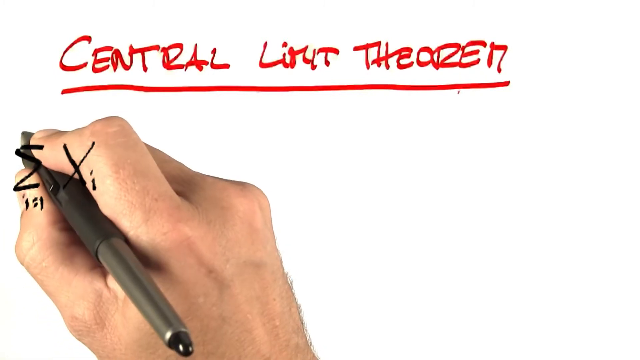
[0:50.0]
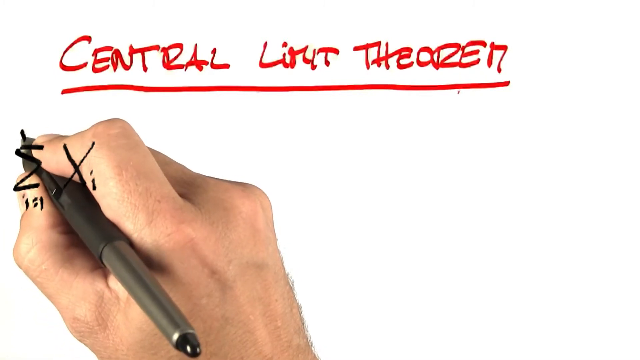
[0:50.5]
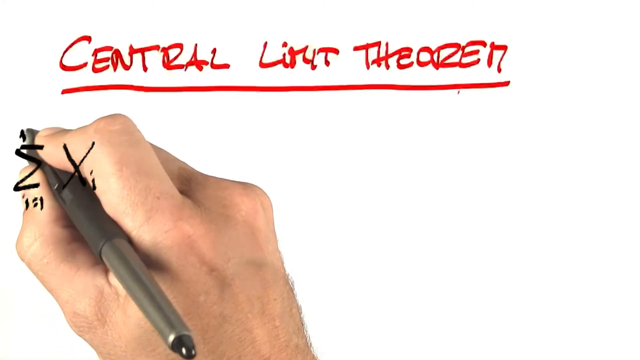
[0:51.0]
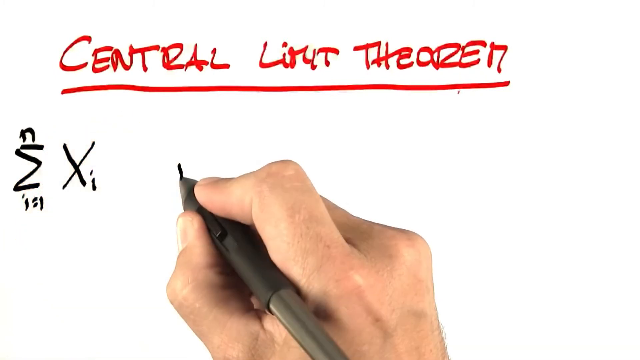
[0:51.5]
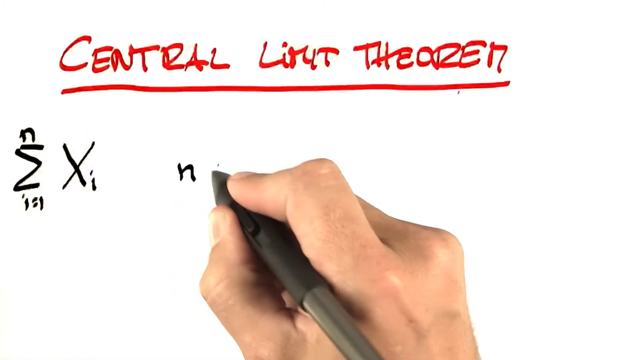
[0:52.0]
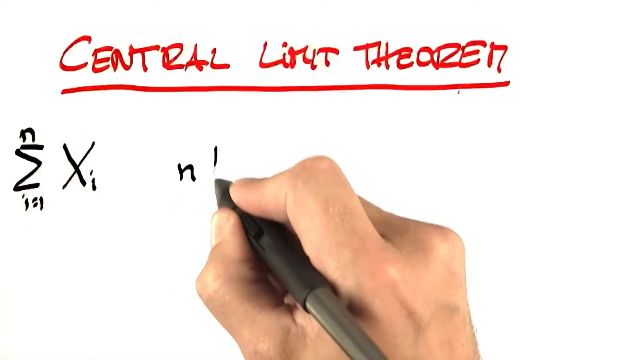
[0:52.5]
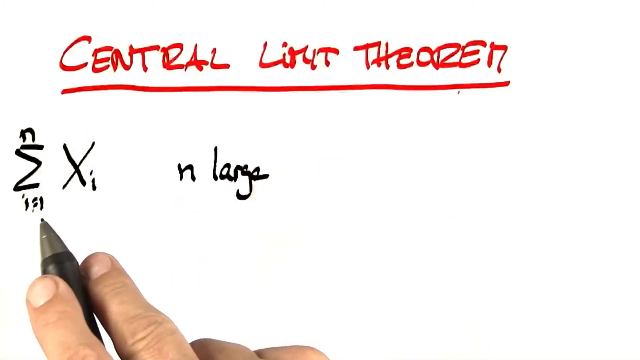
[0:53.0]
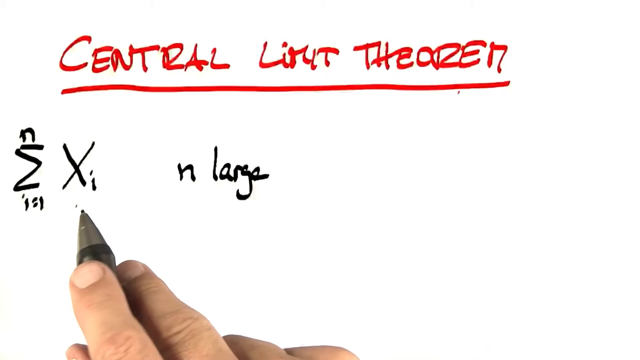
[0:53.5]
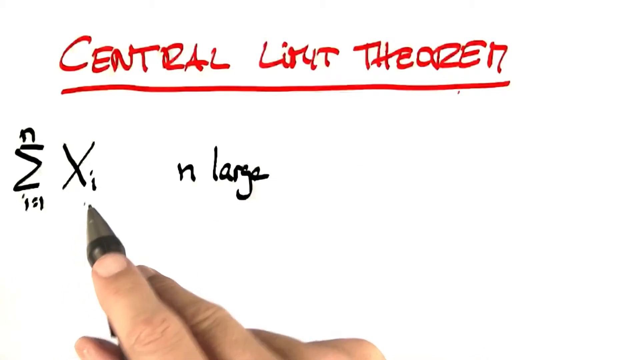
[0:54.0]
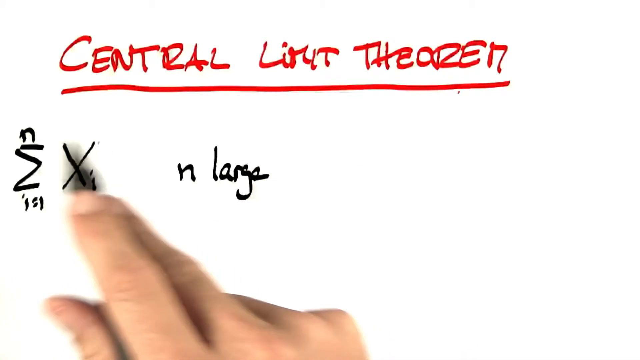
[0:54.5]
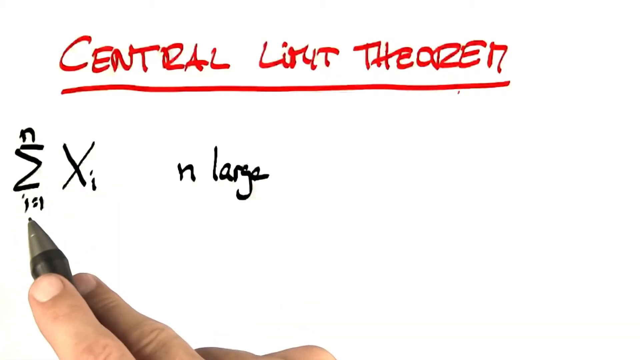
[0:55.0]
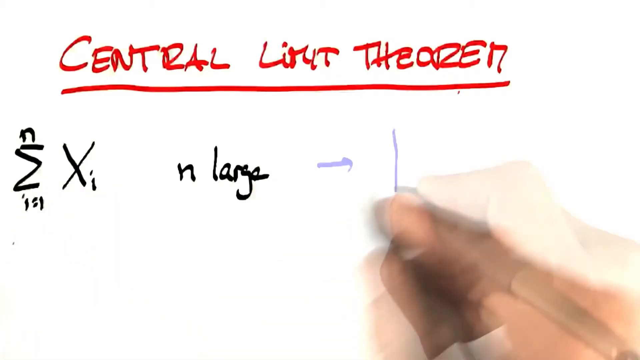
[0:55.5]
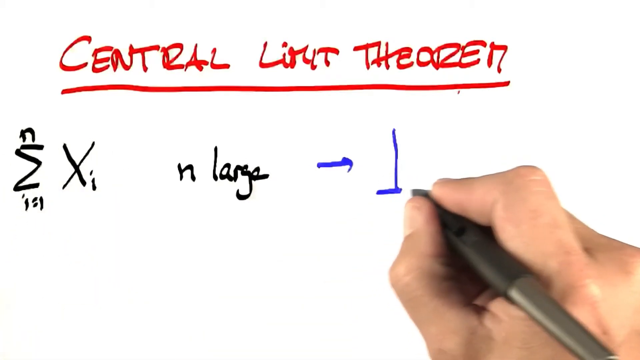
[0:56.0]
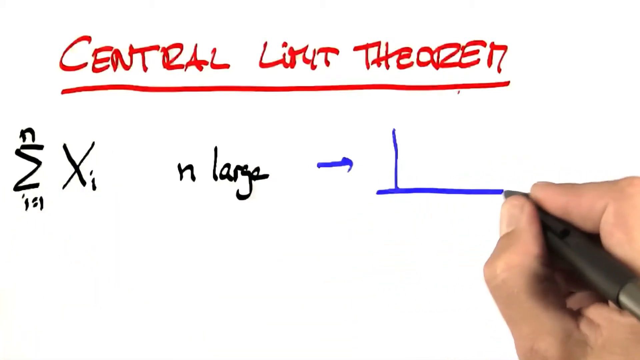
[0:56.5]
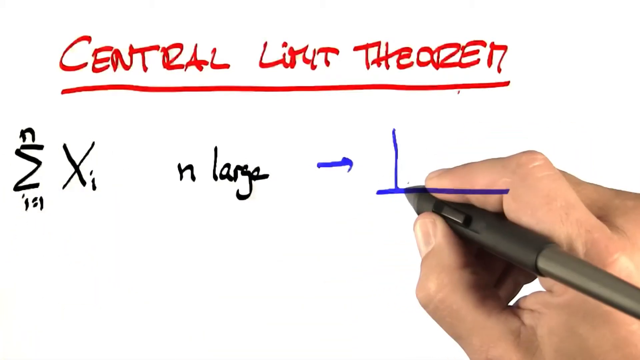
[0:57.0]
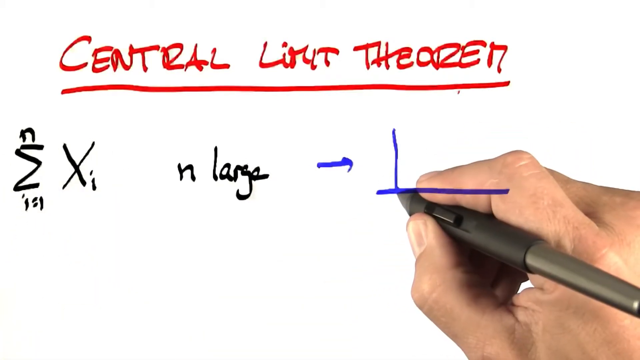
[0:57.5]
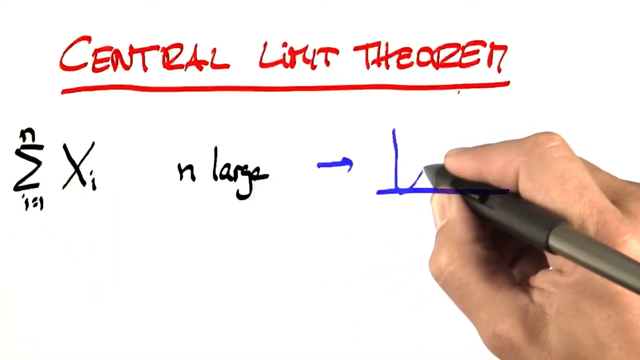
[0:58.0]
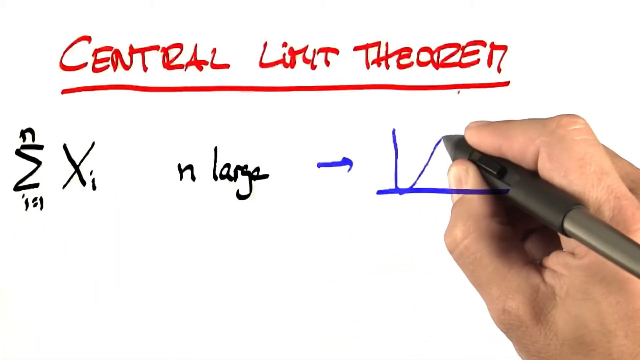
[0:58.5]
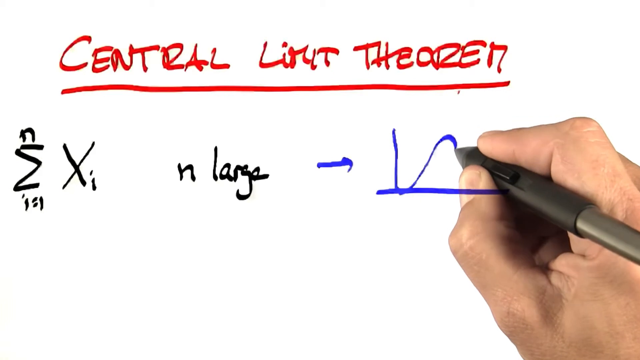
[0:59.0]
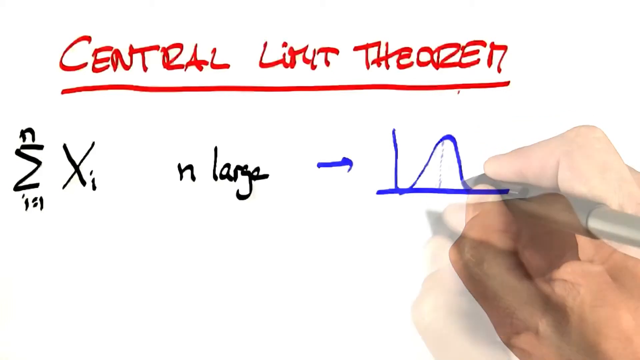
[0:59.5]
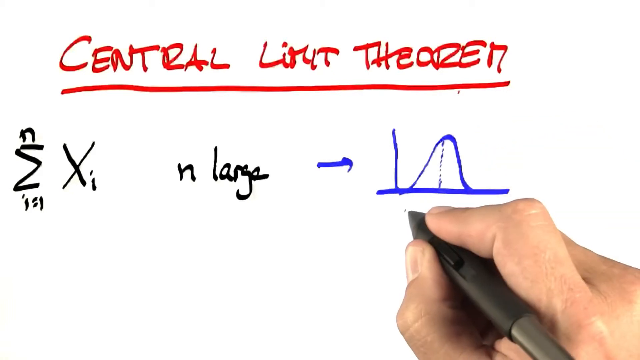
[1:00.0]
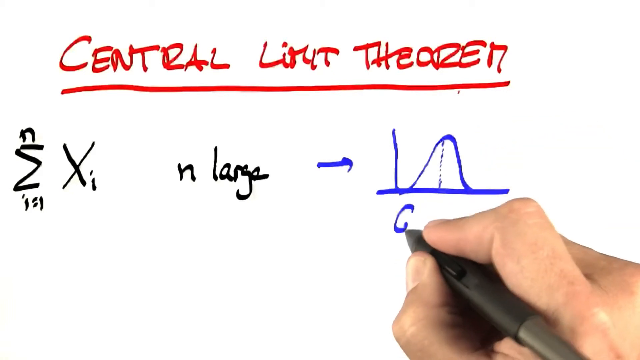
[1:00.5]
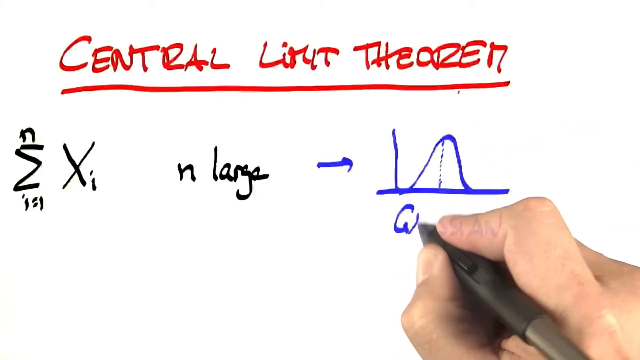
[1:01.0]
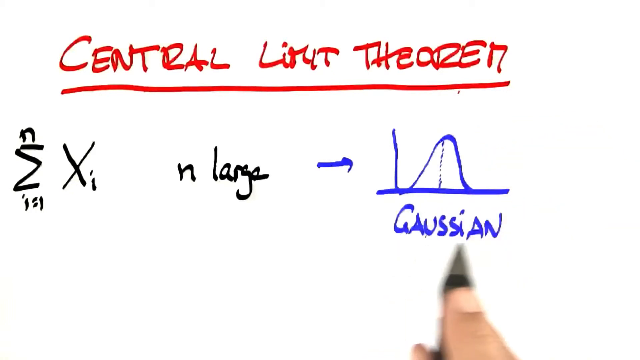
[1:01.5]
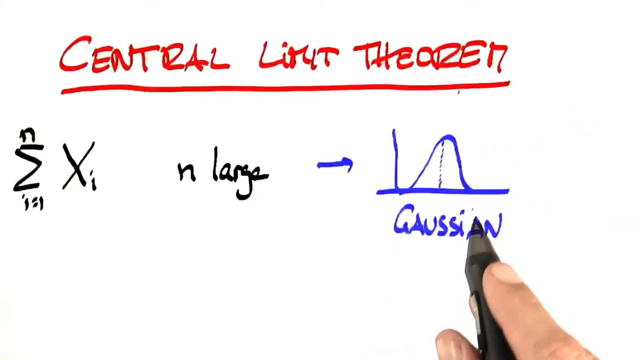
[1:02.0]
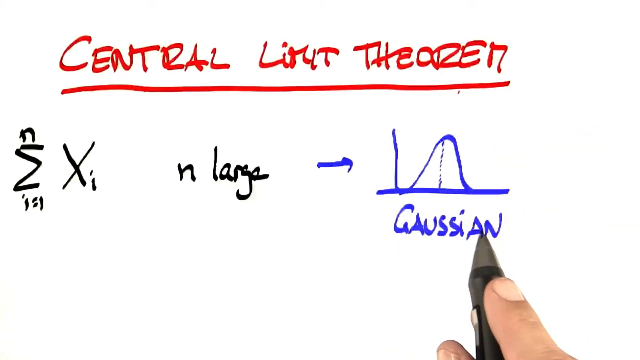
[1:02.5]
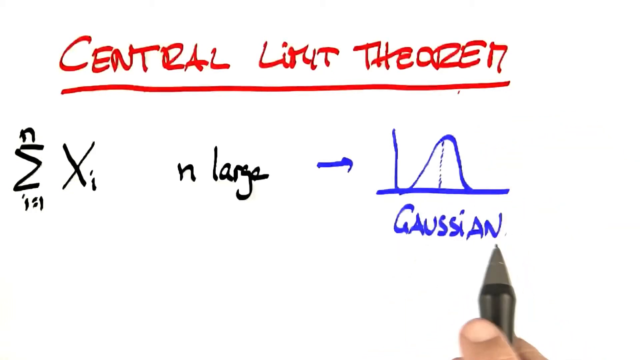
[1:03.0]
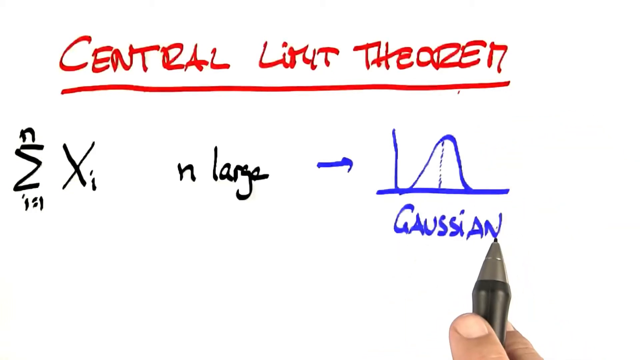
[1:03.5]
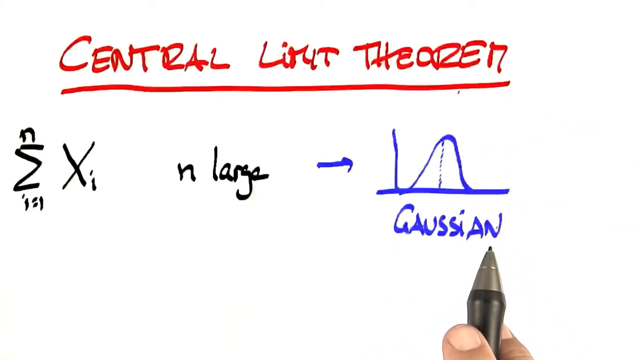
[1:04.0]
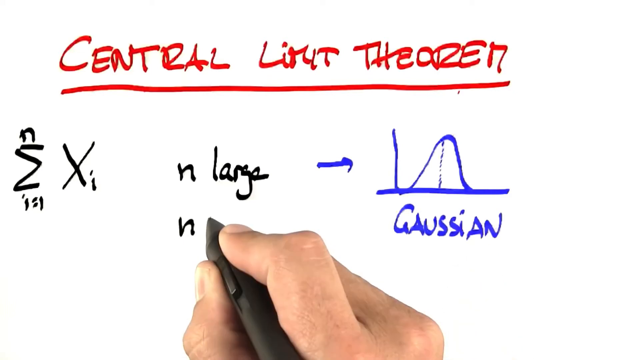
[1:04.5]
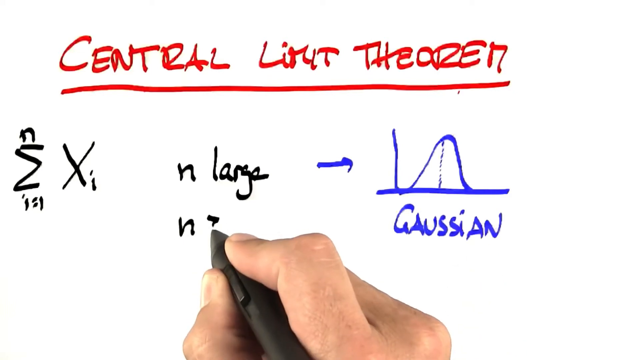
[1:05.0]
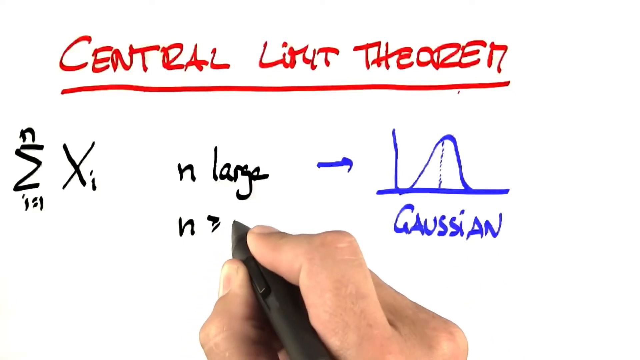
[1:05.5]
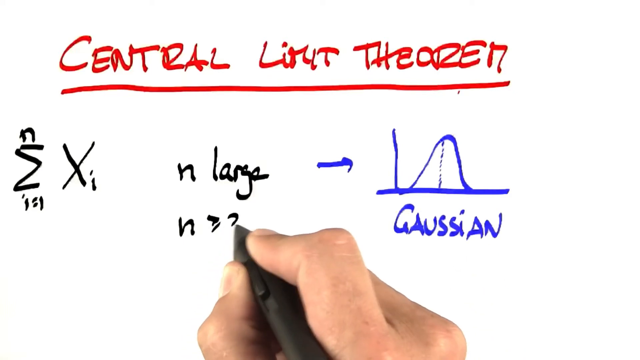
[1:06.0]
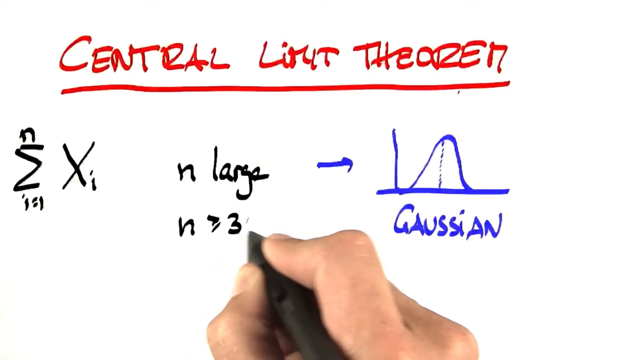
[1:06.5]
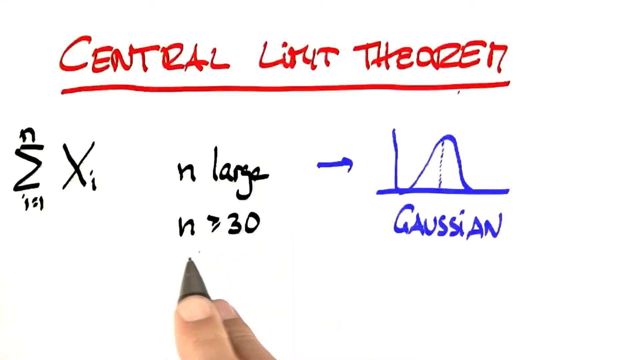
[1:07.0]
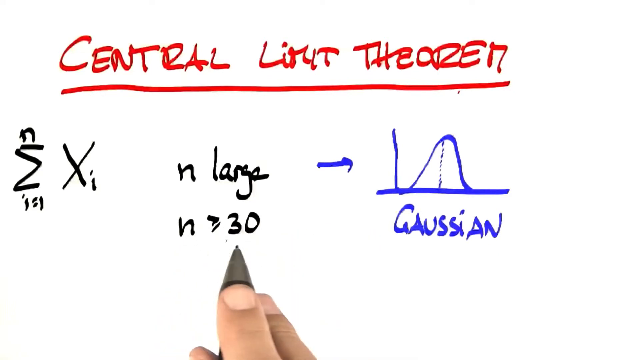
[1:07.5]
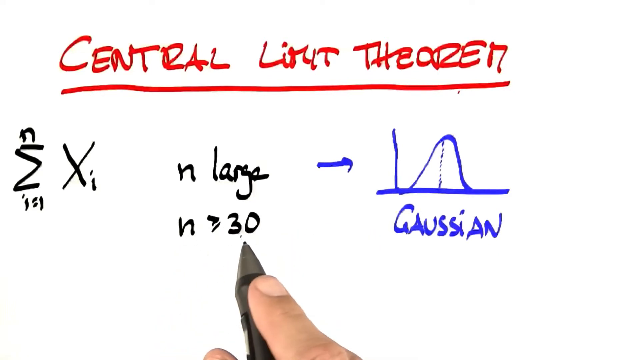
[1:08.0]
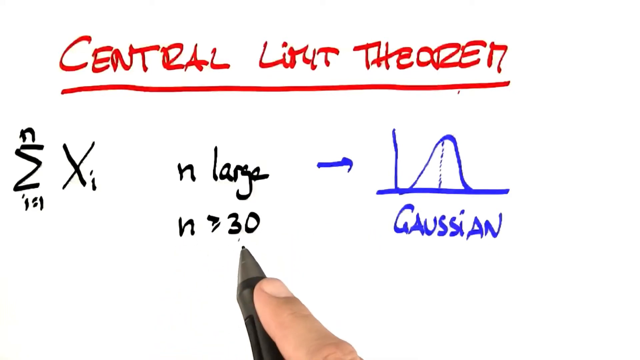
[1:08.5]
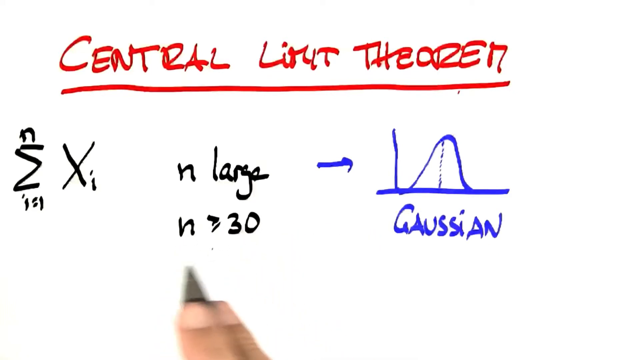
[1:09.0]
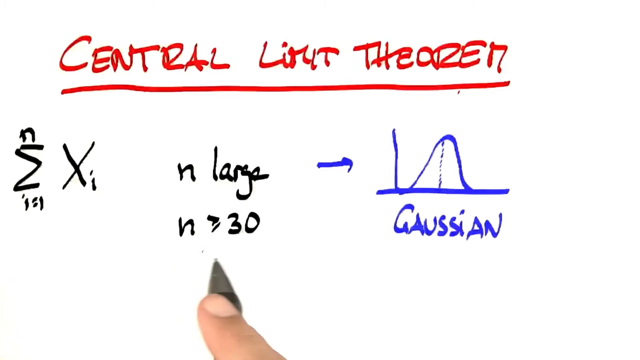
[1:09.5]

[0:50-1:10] At the top of a white screen, "Central limit theorem" is handwritten in red block letters, with the three words underlined in red. On the left-hand side, a person's hand holds a pen, and superimposed over the hand is the Greek letter epsilon, with a capital X and a small letter i next to it. The pen writes a small letter n above the epsilon and the equation "i = 1" below it. The hand then moves halfway across the page and writes "n large". It circles the epsilon for a moment and comes back. In blue, an arrow points from the word "large" to the x and y axes of a graph, where he draws an upward-facing parabolic curve in blue. Below that he writes the word "Gaussian" in blue block capital letters. Then, in black, he writes "n = 30".